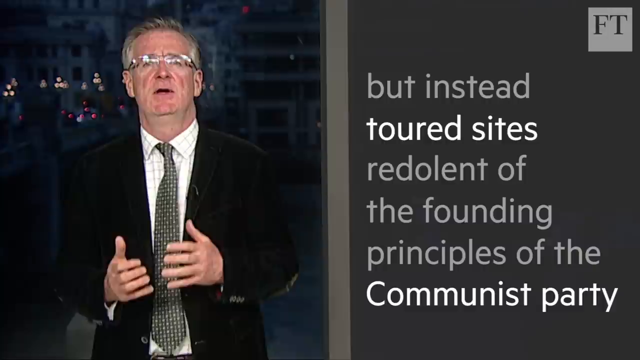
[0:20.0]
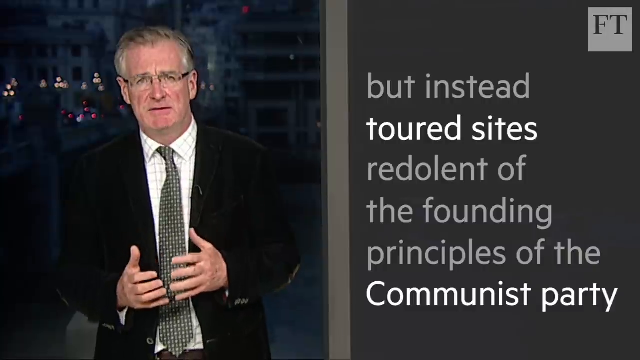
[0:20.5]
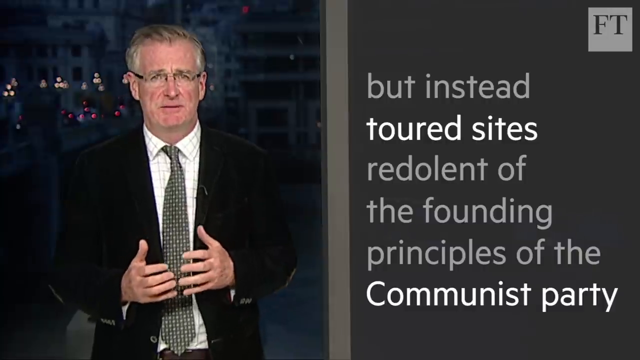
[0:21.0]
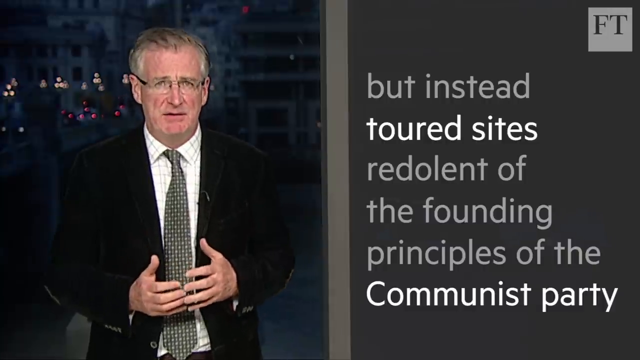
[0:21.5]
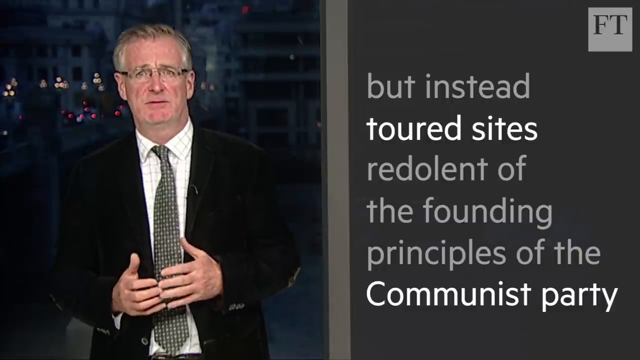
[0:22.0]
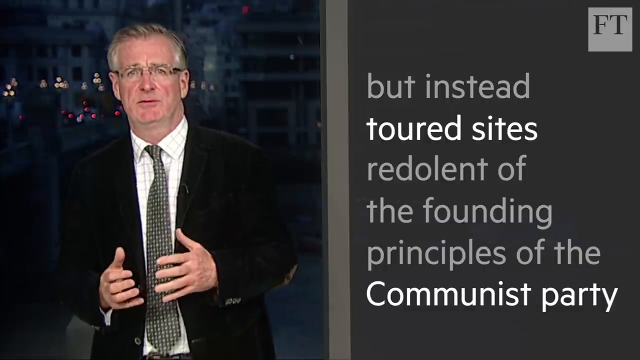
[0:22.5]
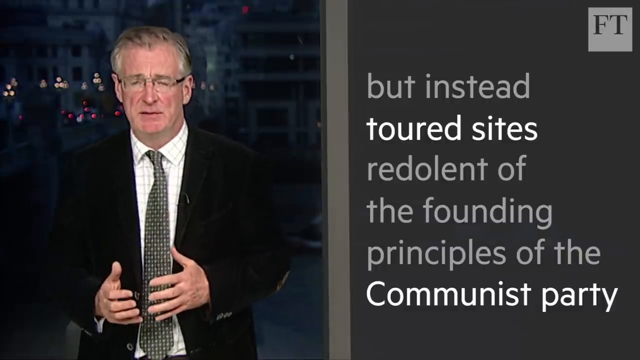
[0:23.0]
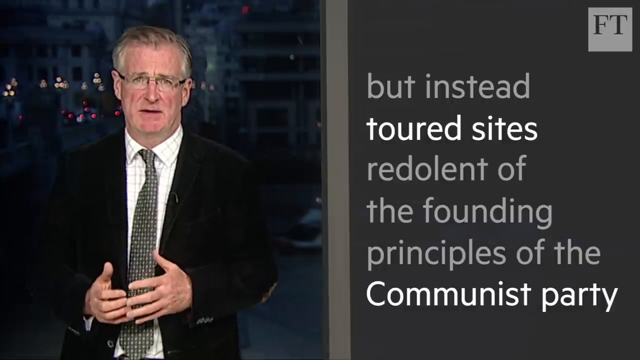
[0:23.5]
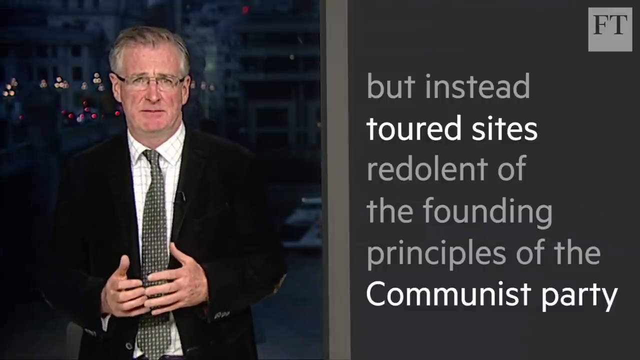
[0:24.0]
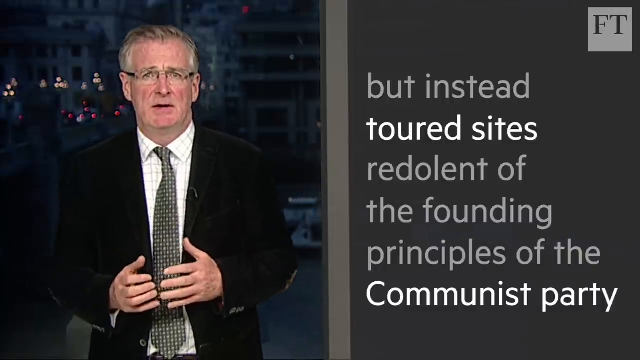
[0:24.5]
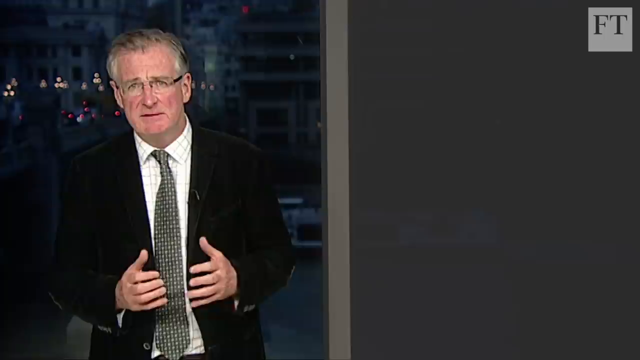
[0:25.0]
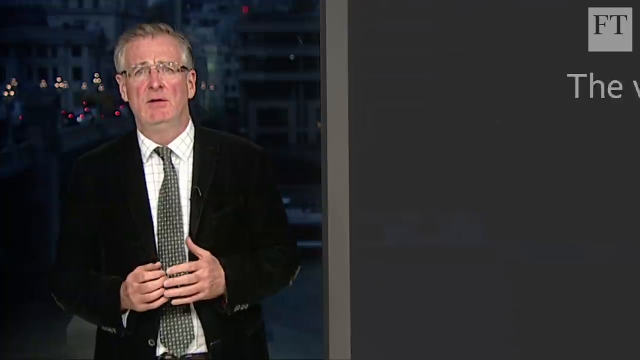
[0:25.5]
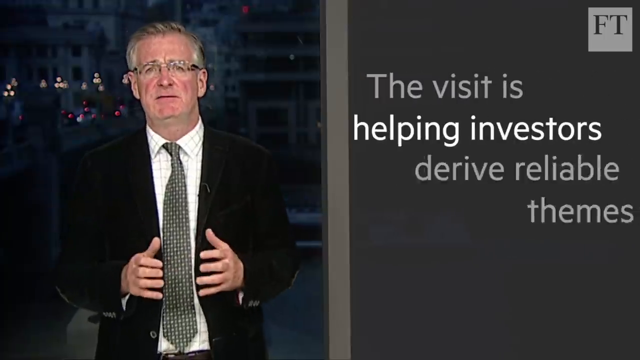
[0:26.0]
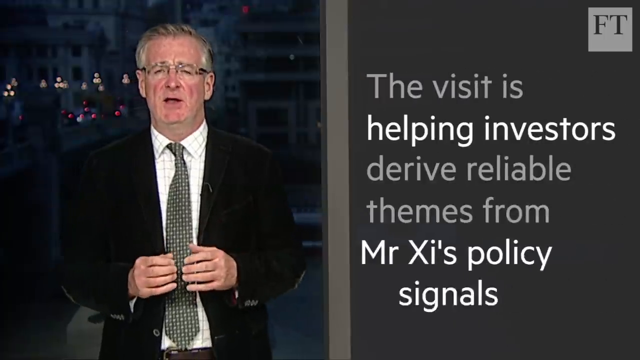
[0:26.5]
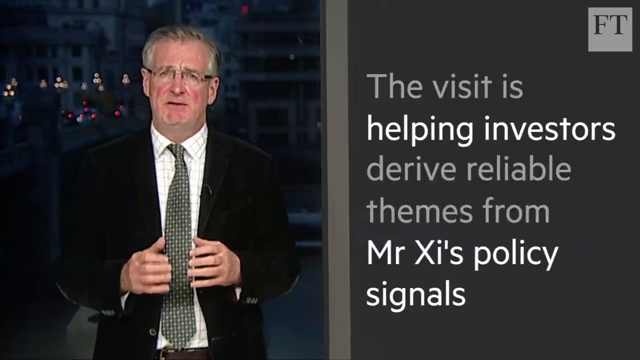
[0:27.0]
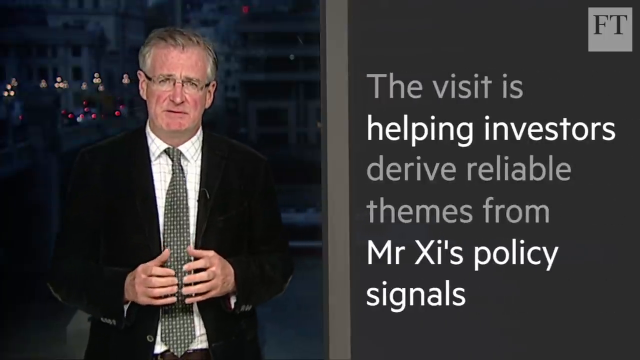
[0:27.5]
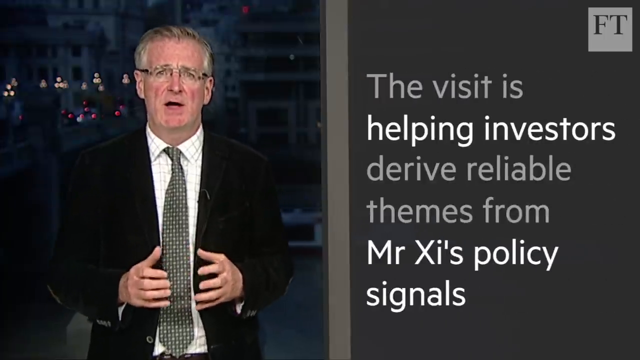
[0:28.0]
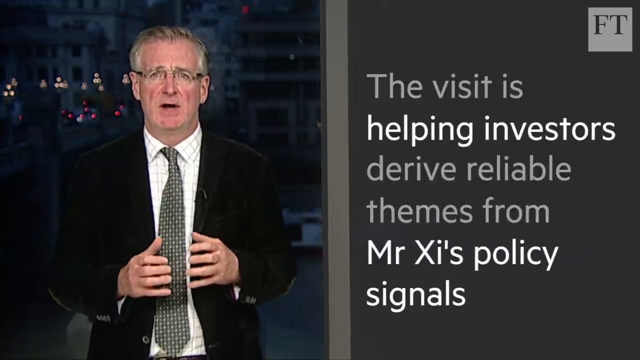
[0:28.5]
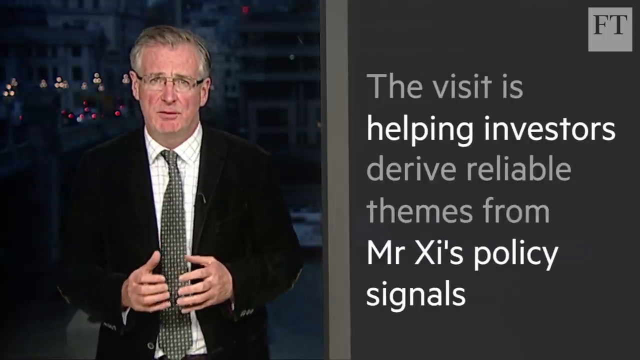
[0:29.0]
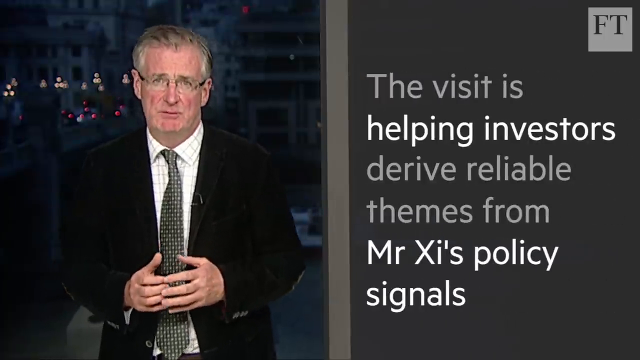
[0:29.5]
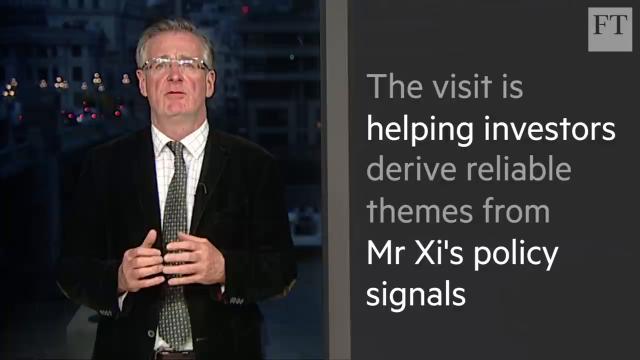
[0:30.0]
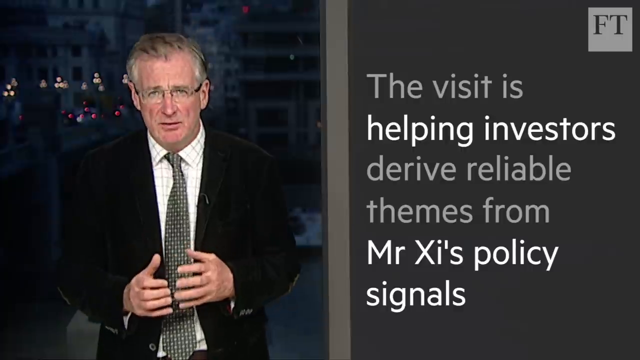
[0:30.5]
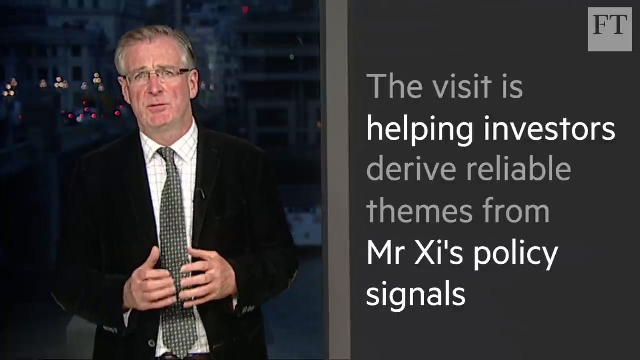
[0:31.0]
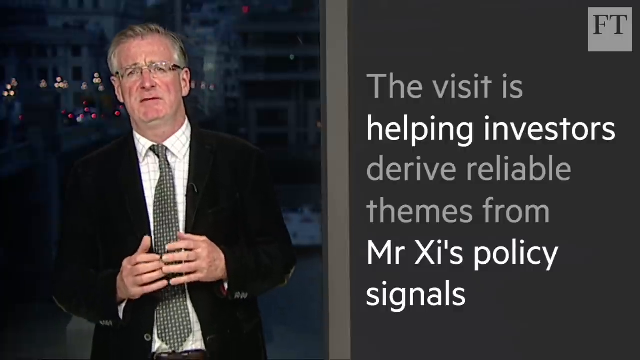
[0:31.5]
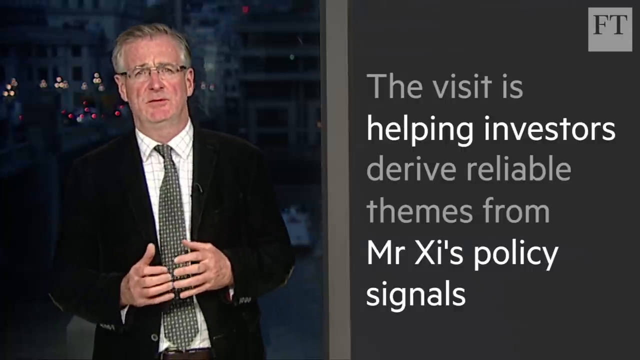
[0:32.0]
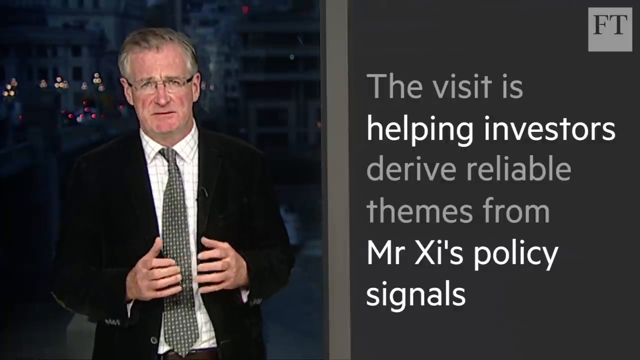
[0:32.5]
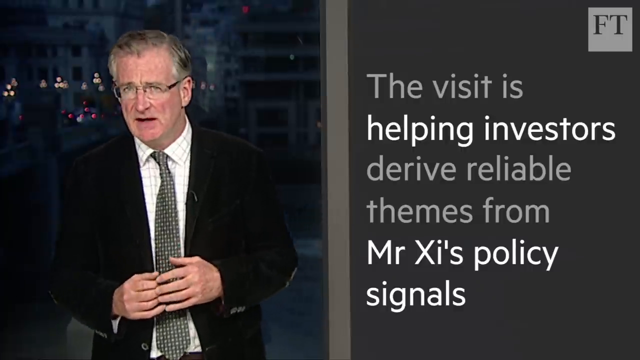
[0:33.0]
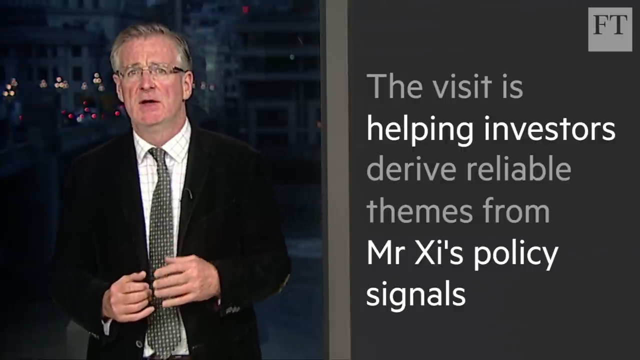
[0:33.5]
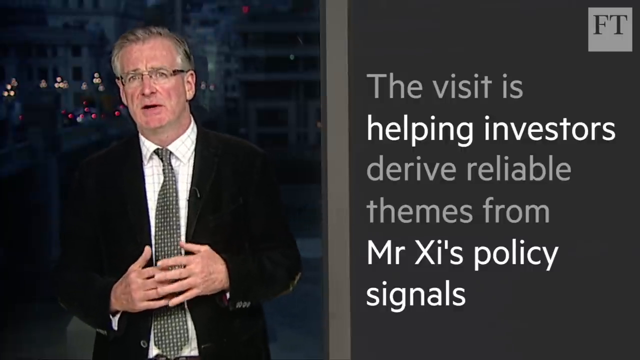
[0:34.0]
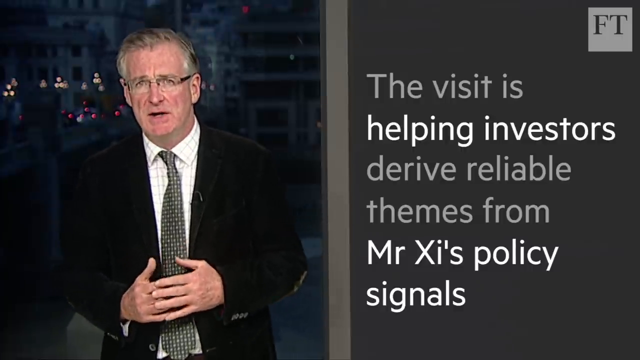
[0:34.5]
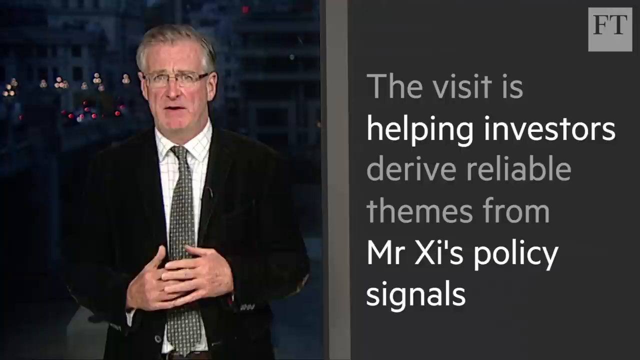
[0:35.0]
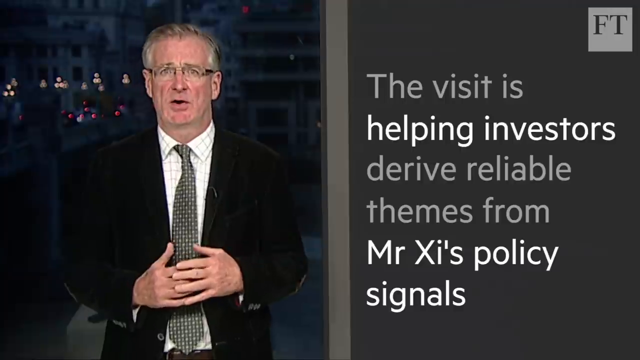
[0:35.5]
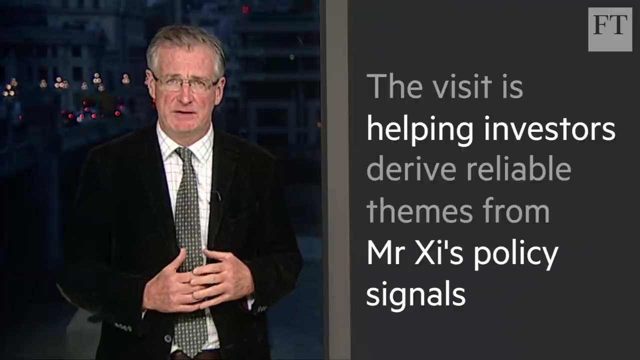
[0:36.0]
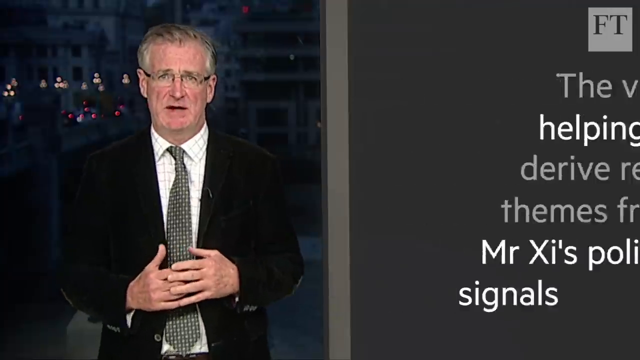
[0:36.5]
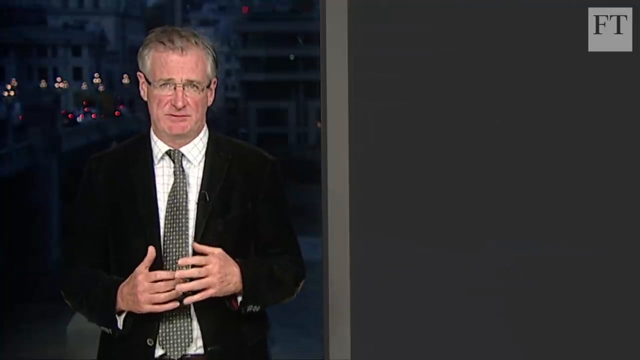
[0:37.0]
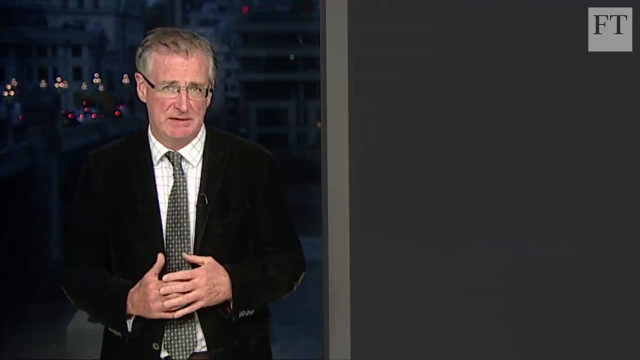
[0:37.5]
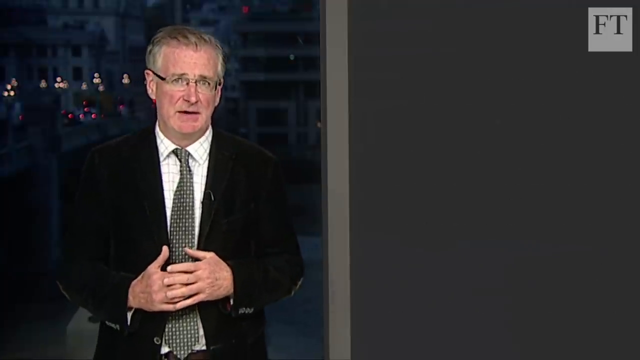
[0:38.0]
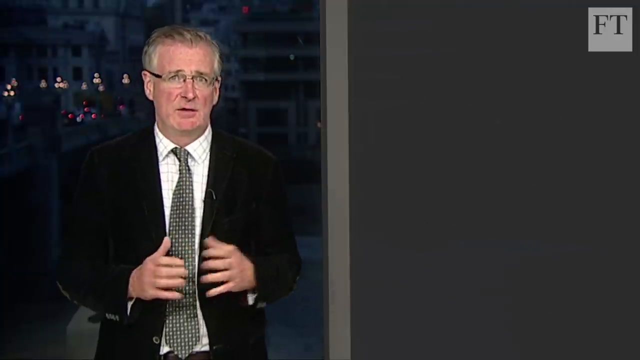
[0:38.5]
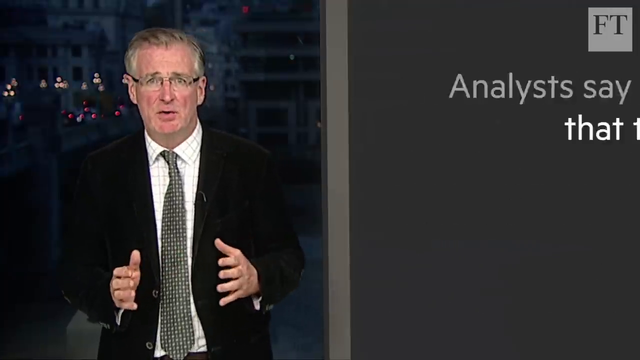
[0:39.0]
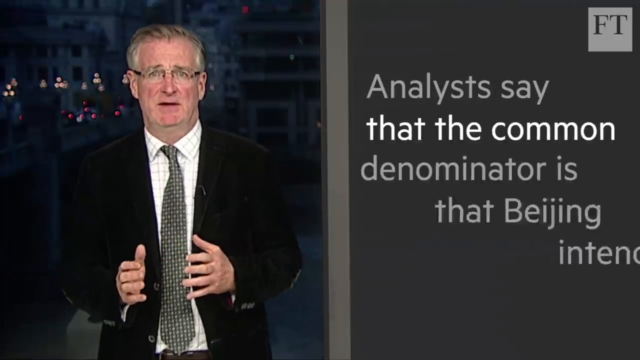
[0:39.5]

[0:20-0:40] The newscaster stands on the left-hand side of the screen in front of what looks like a window overlooking a city at night, with some lights and traffic moving behind him, the cars' lights on. He wears wire-rimmed glasses, a dark jacket, a white check shirt and a dark gray patterned tie, and has graying hair. As he speaks, he holds his hands in front of him and emphasizes his words with them. On the right, the text box reads "but instead, toward sites redolent of the founding principles of the Communist Party." The initials "FT" are in the upper right. The next text box reads "the visit is helping investors derive reliable themes for Mr. Xi's policy signals," with "Visiting is helping investors" and "Mr. Xi's policy" highlighted in brighter white. The text box changes again as the man continues to speak, reading "analysts say that the common denominator is that Beijing intends to narrow social inequalities."